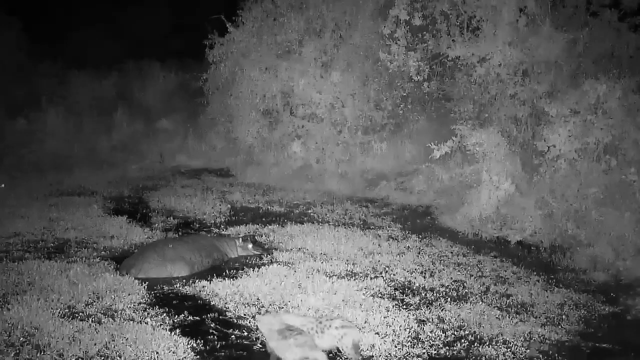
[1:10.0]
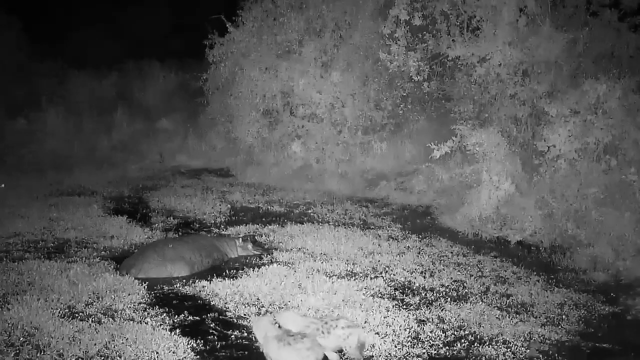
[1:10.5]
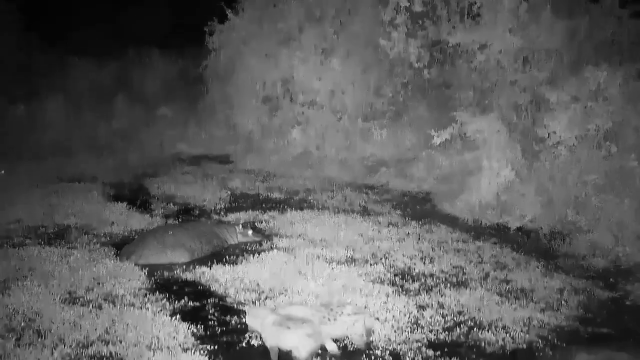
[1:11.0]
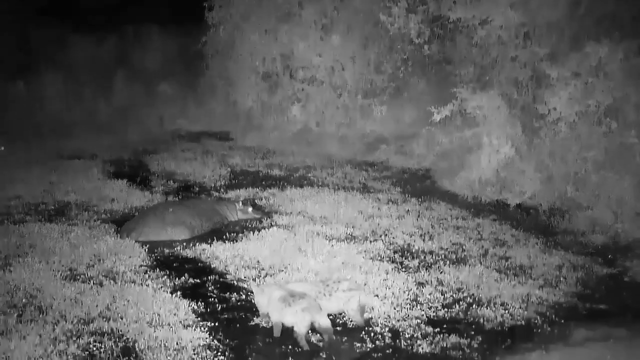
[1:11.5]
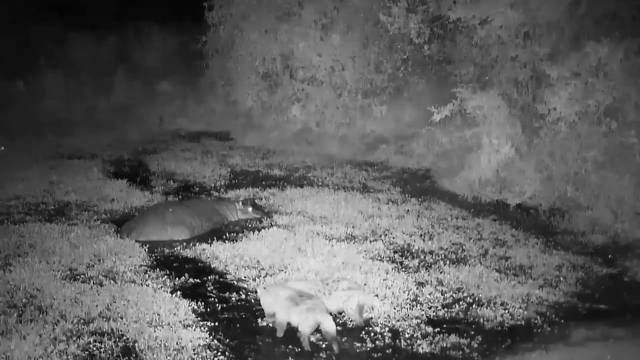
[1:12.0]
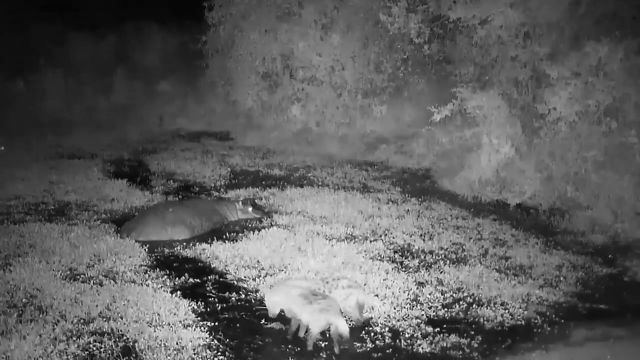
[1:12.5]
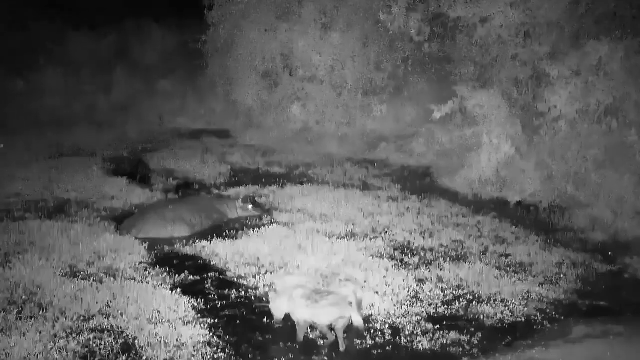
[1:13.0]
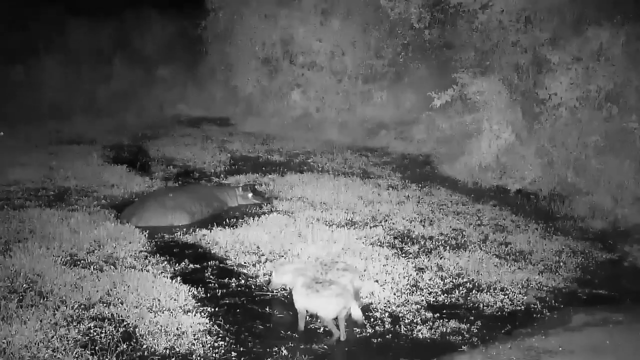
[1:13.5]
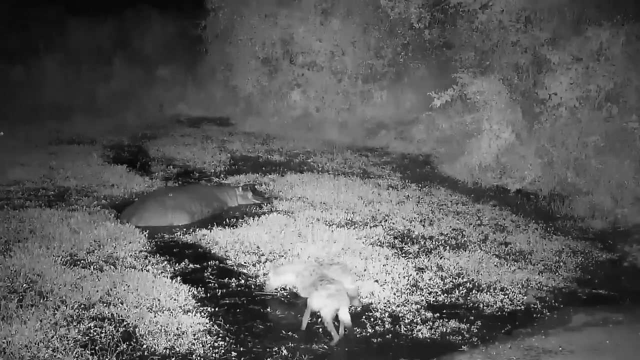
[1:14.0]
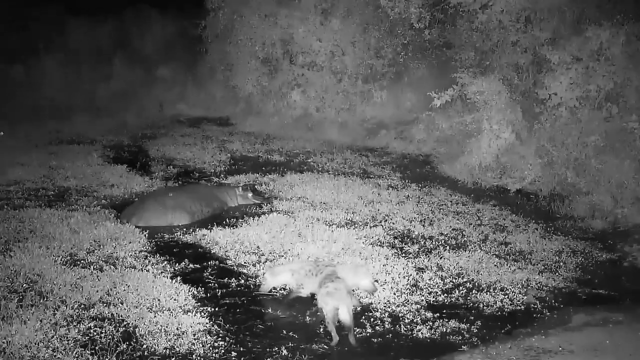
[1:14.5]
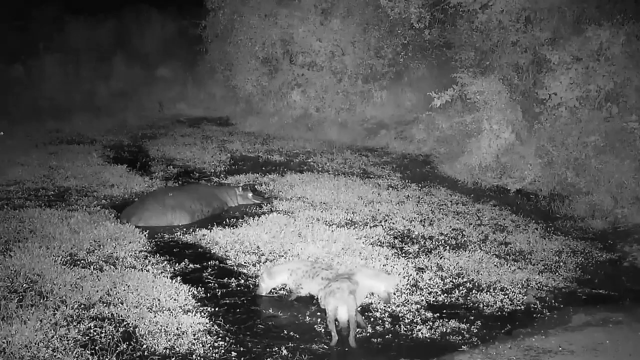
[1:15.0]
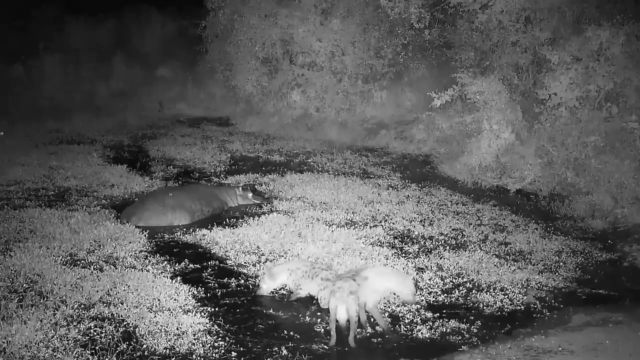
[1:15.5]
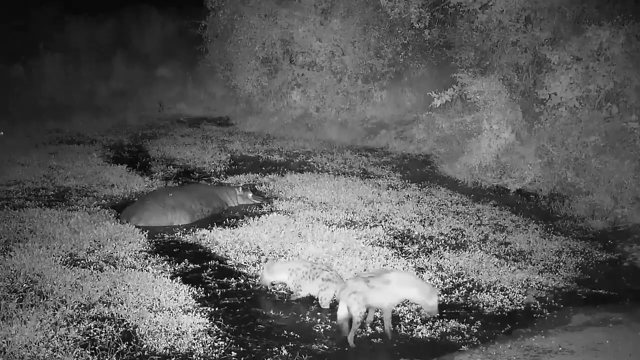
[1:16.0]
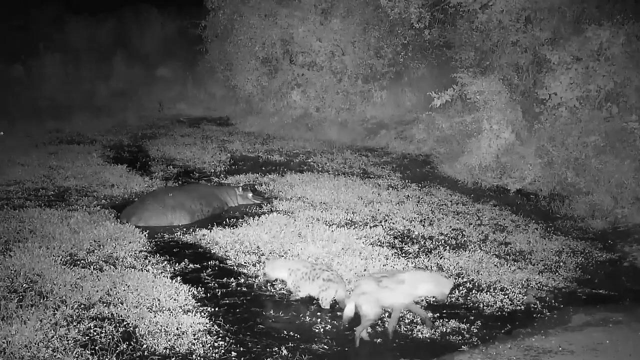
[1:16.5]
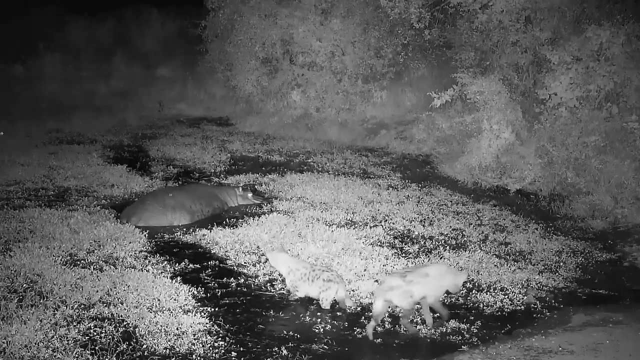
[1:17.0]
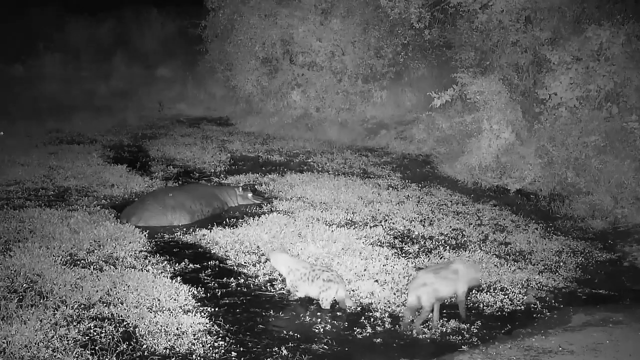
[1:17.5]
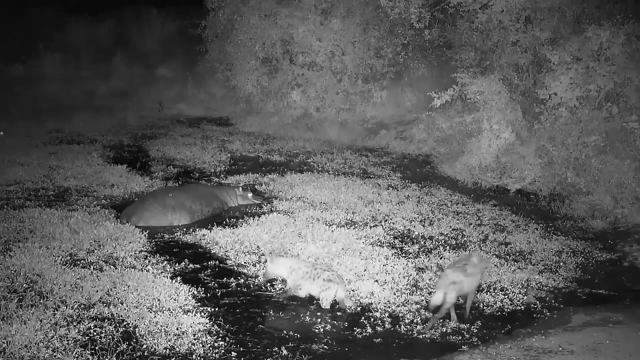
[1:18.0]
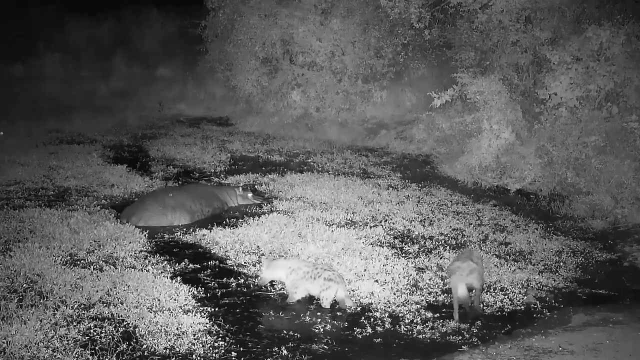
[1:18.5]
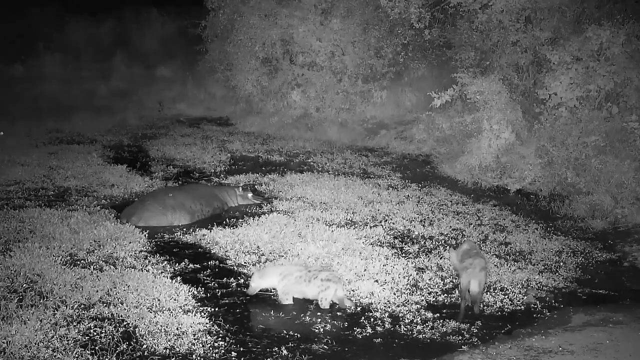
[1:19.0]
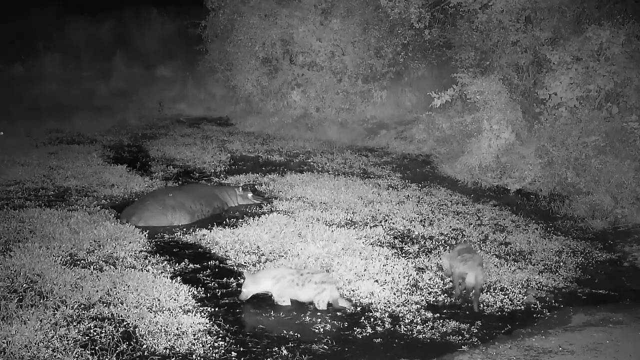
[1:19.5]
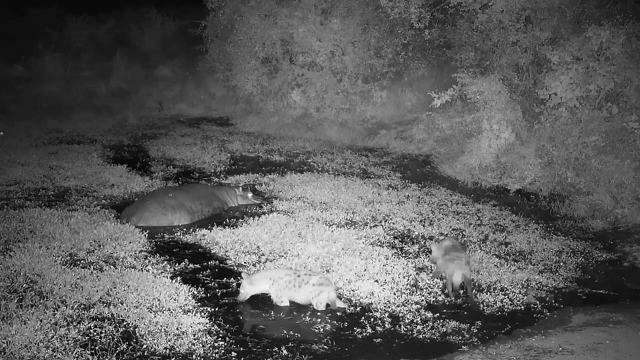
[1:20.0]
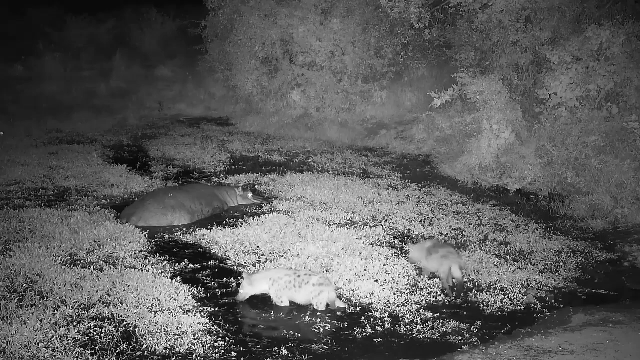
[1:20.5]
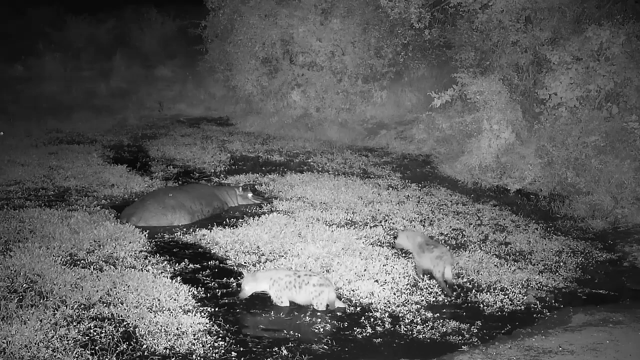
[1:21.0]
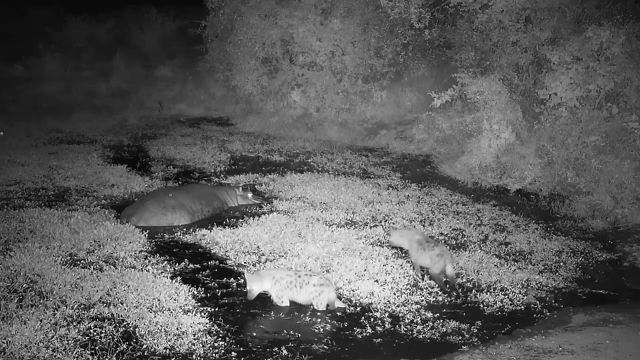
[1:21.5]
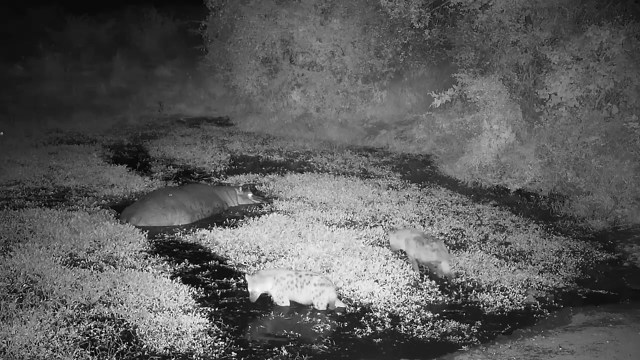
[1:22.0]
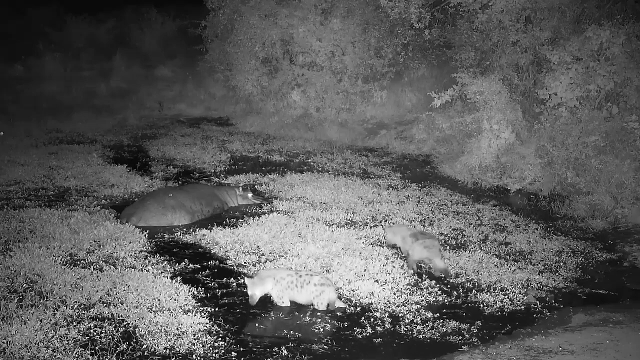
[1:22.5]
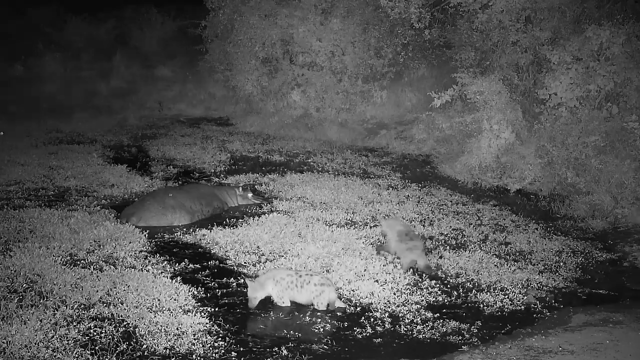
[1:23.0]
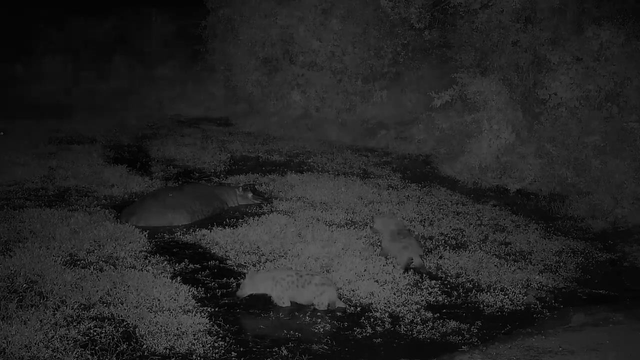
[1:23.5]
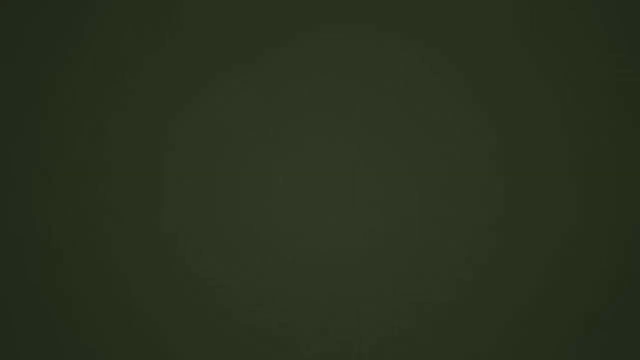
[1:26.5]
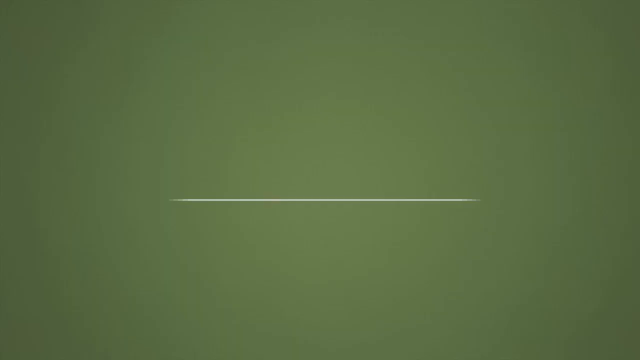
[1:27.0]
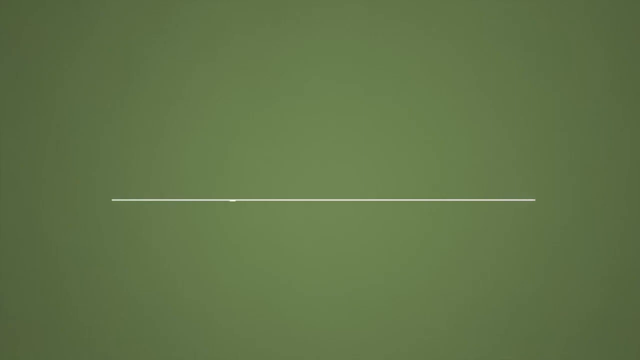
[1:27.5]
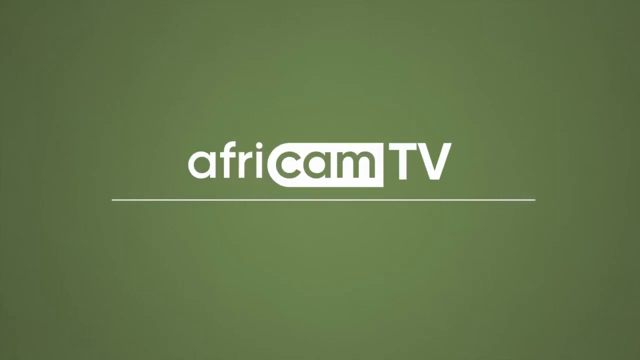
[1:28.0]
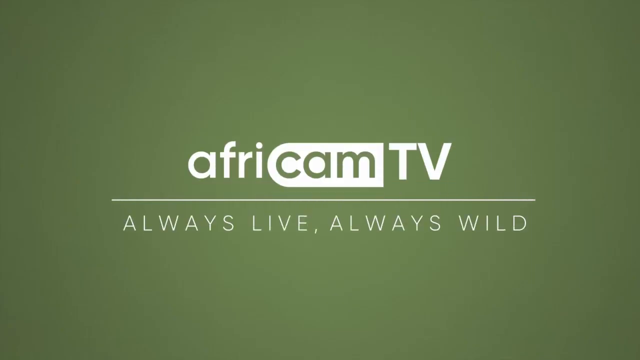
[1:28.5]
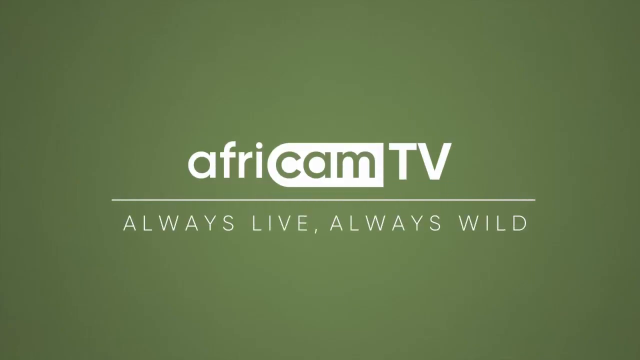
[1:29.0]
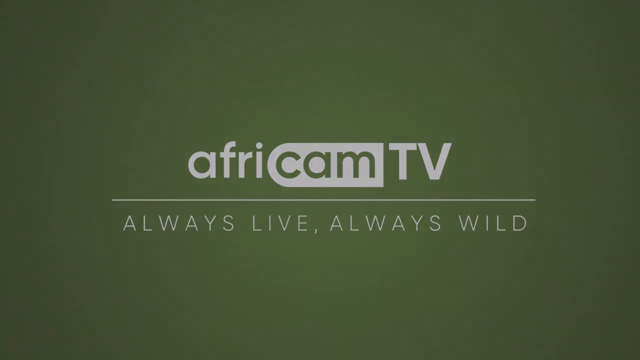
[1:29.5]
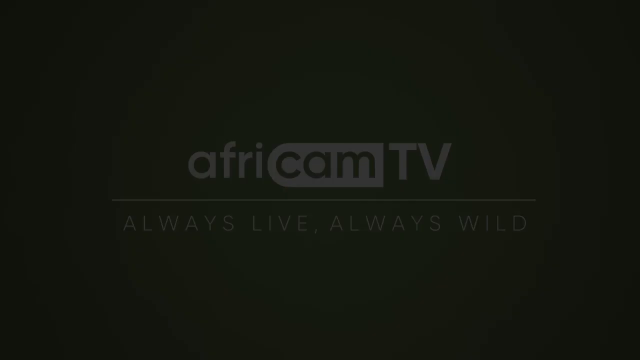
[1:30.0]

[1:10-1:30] Three animals are visible: two small ones and one big one that sleeps inside the water. The small animals look different from the big one, though what kind of animals they are cannot be identified because the footage is black and white. Trees are in the background of the zoo. A big light illuminates the animals, and it appears to be evening, since only the area where the light points can be seen. The animals are eating something. There is no other action or change, and the tank of water the animals drink from is visible.